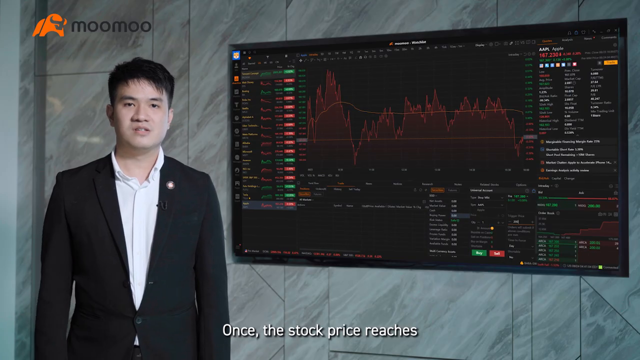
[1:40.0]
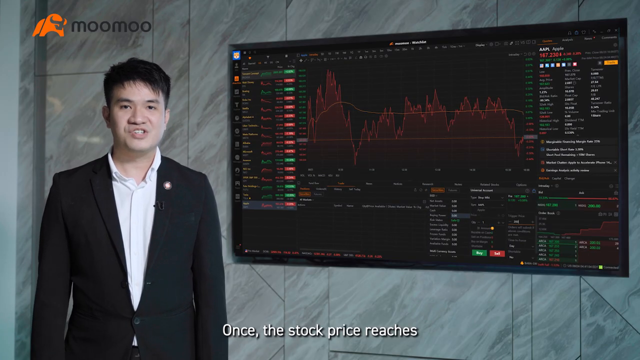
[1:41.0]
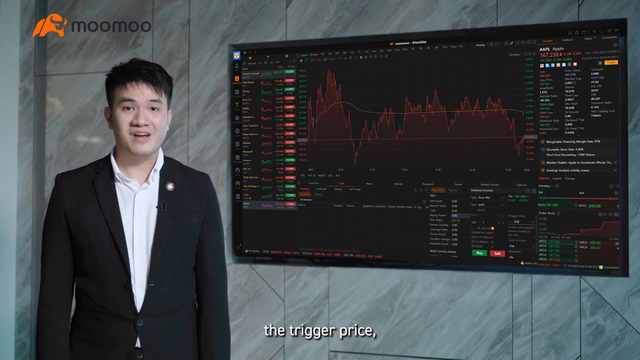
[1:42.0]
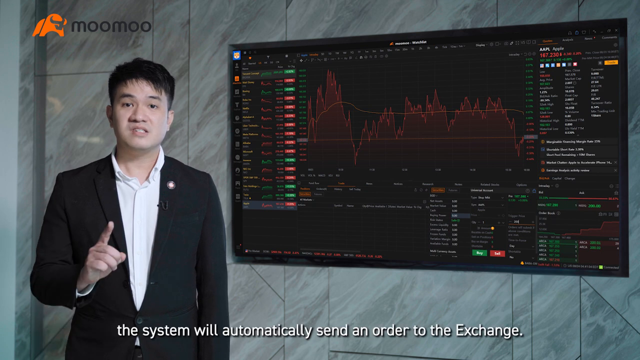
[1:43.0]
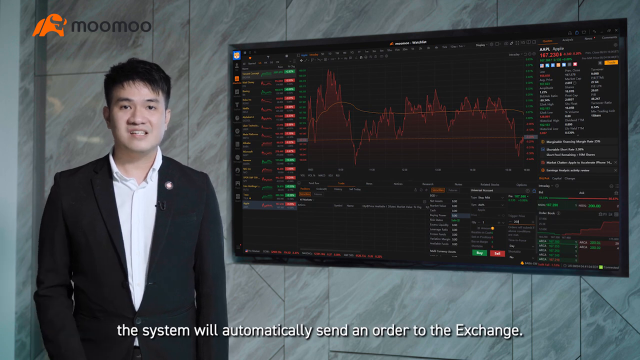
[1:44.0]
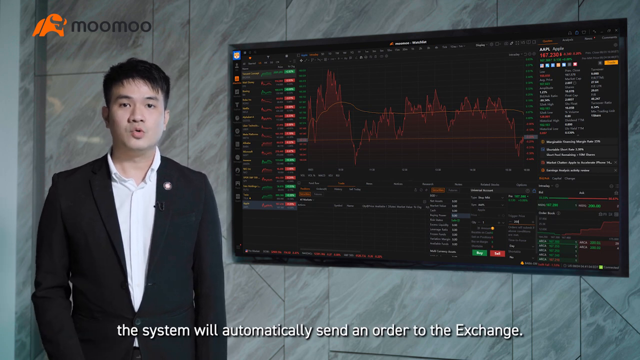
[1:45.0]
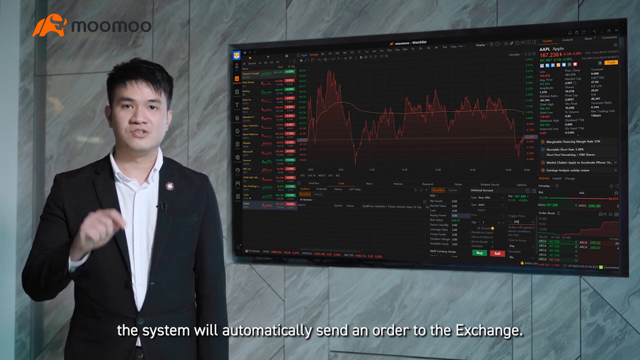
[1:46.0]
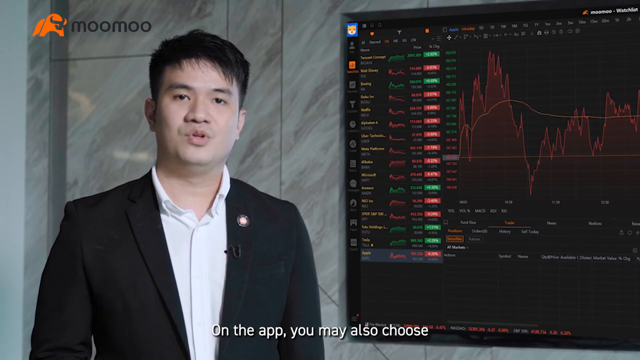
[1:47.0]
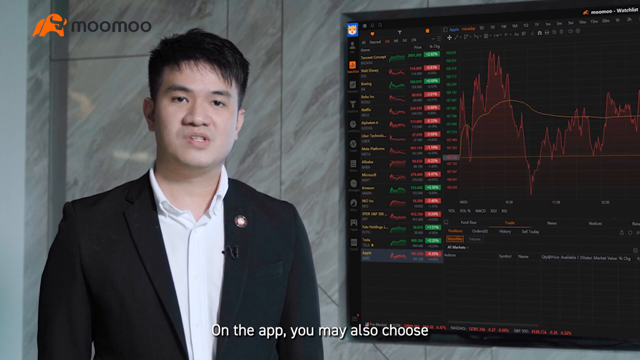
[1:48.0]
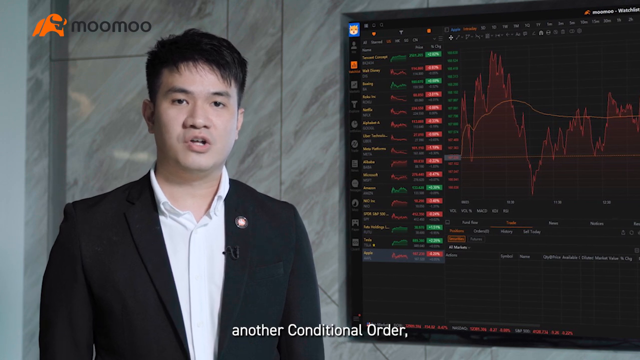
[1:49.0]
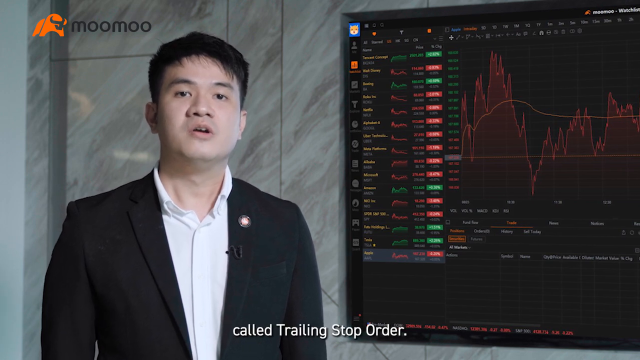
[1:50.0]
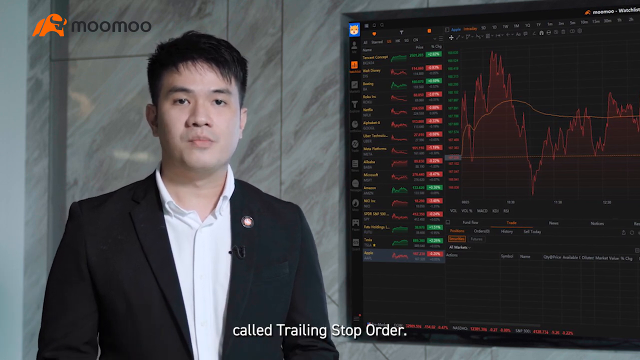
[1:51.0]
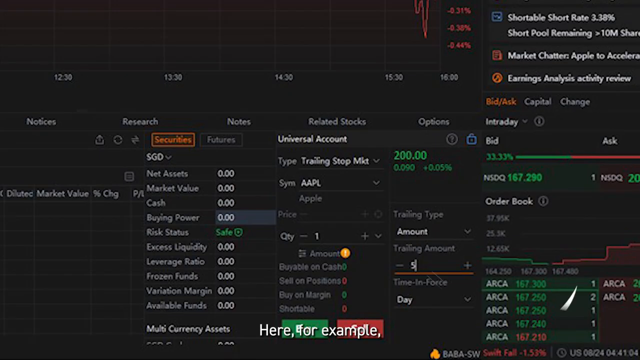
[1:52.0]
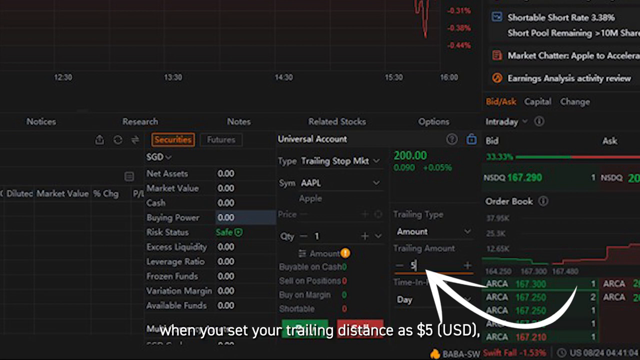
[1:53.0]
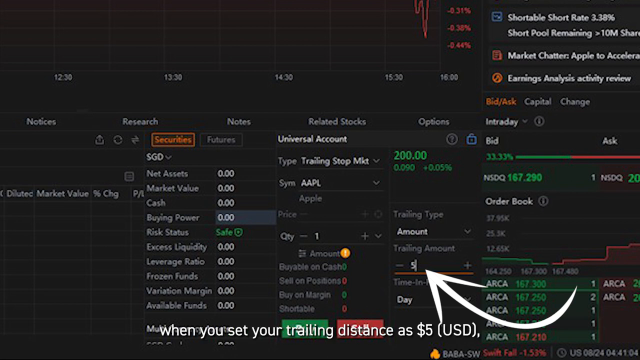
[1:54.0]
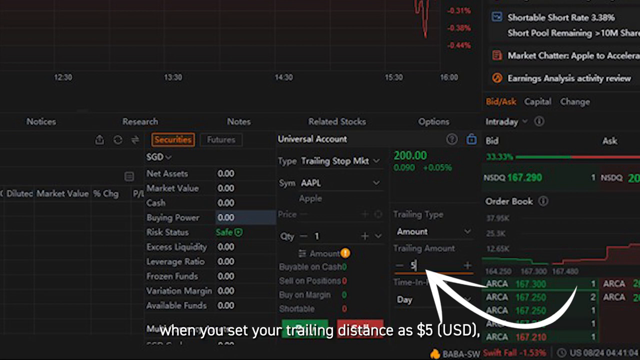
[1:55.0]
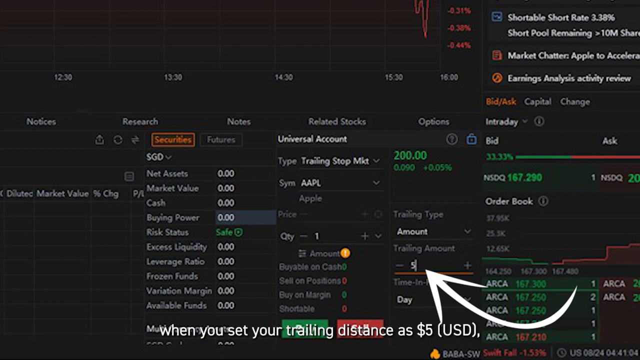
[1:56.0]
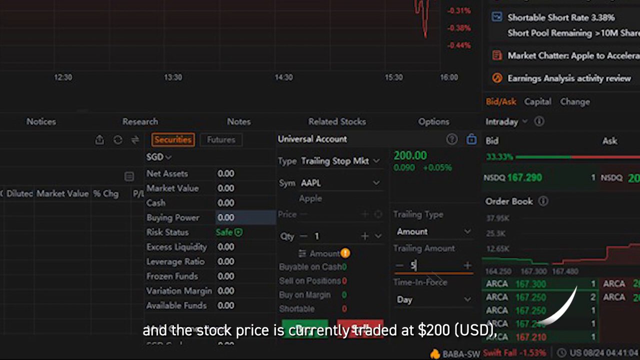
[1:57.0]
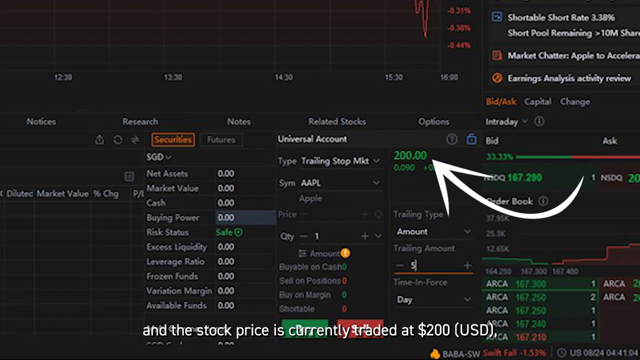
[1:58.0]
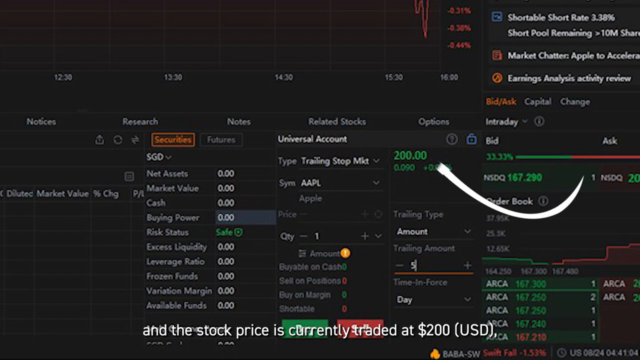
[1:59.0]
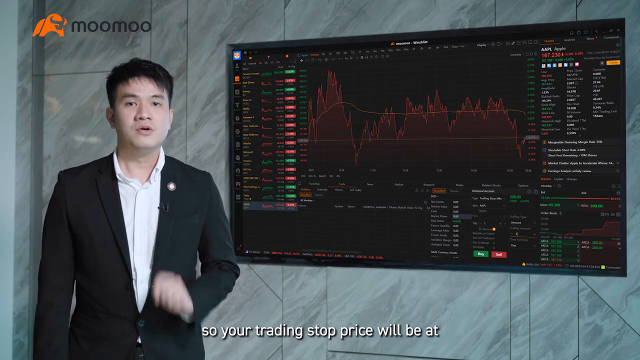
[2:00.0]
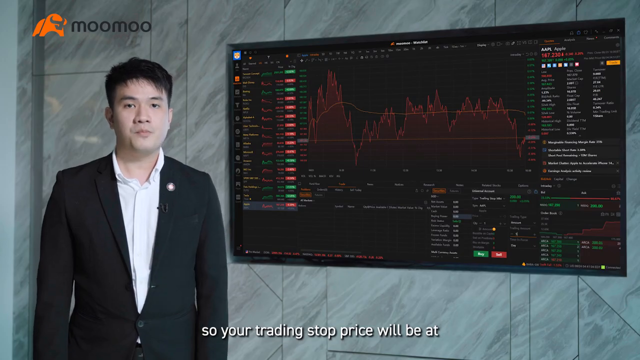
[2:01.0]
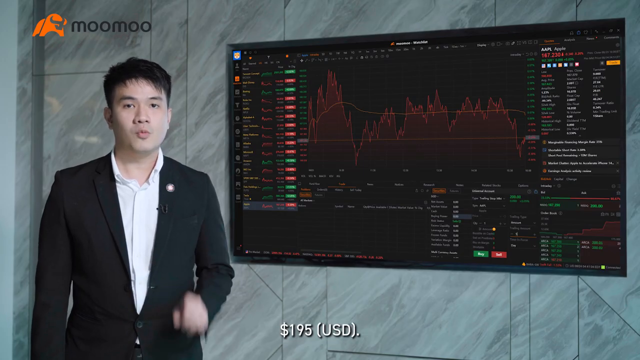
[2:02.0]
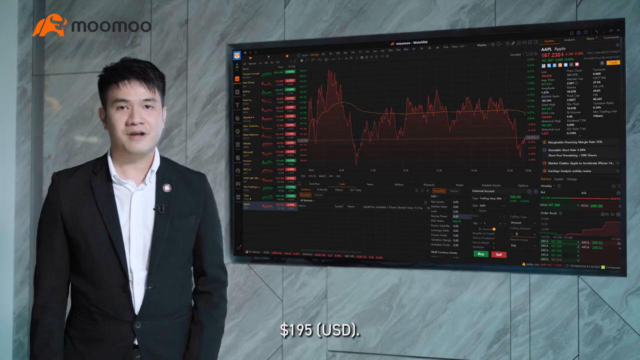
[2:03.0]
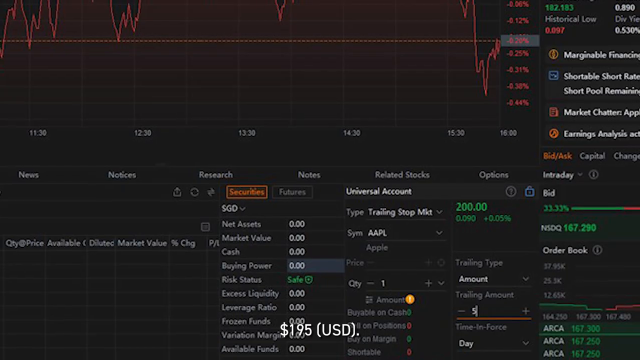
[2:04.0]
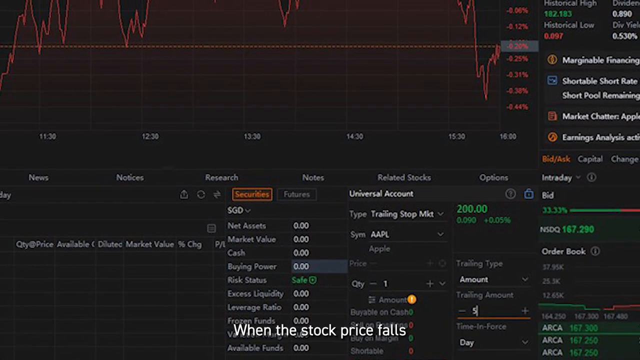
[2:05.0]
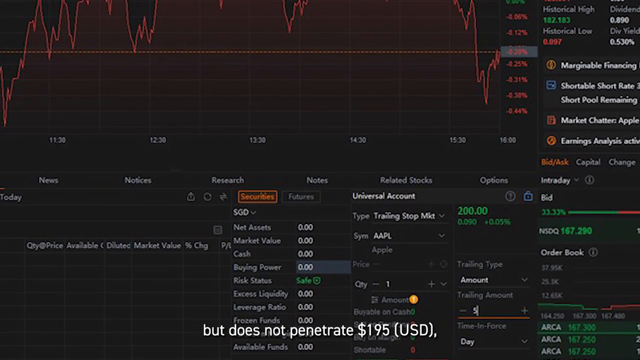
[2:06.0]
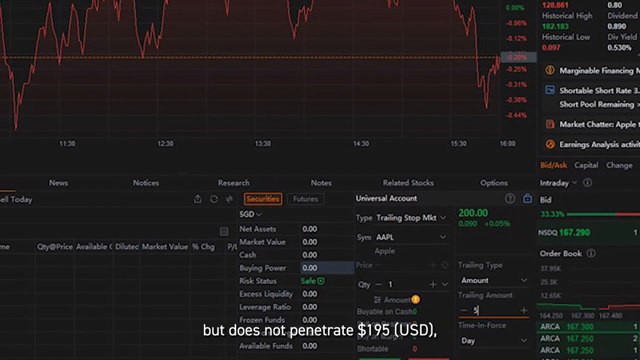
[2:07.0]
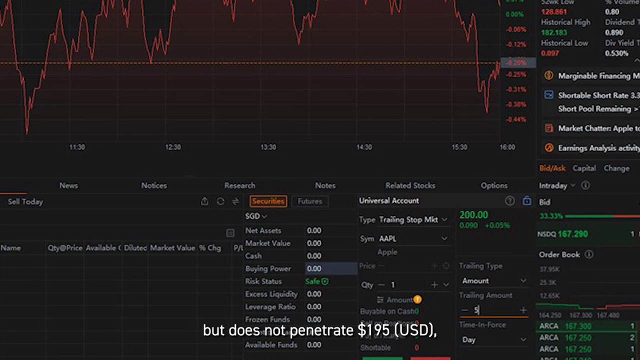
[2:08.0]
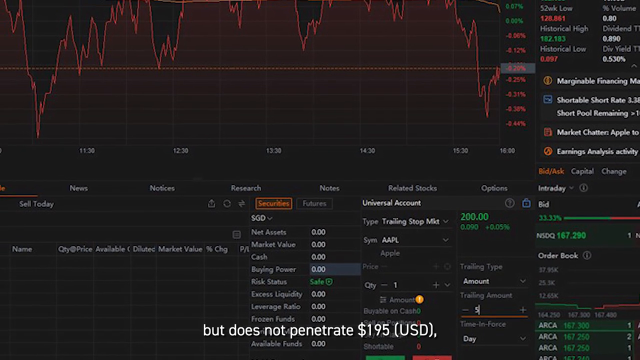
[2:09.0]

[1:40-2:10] Lee continues answering Olivia's concerns, explaining an automatic order or stop. As he explains the trailing amount, the view zooms in on it on the screen. He gives a specific example involving a stop set at $200 and a price falling $5 to $195.